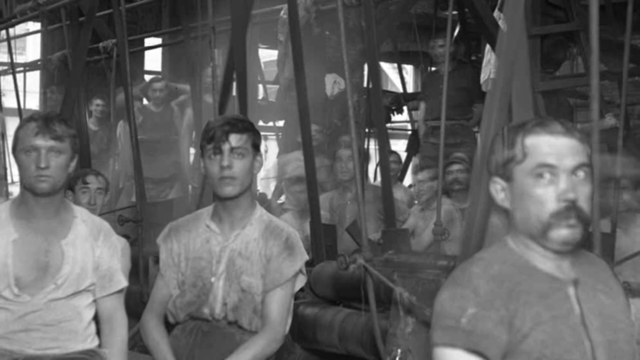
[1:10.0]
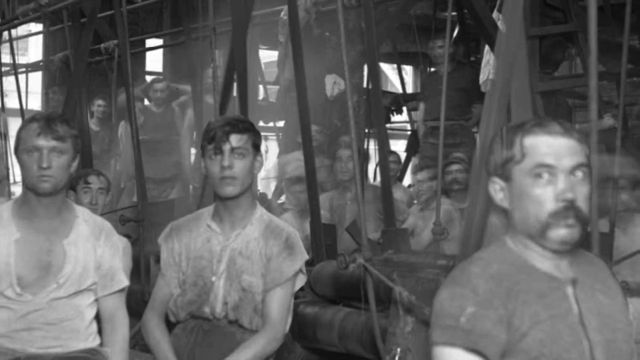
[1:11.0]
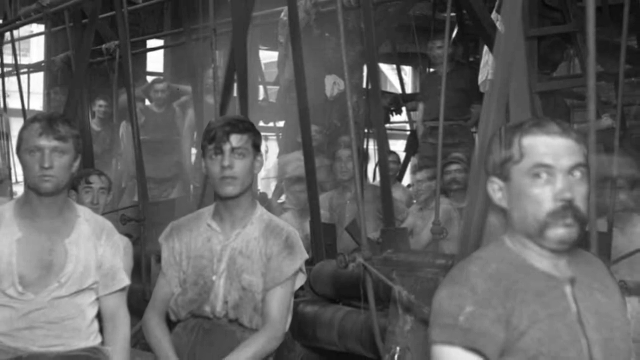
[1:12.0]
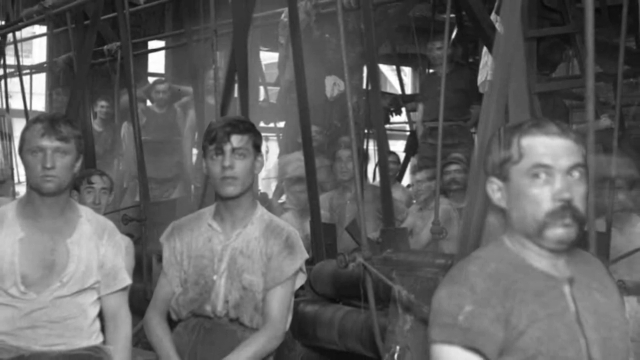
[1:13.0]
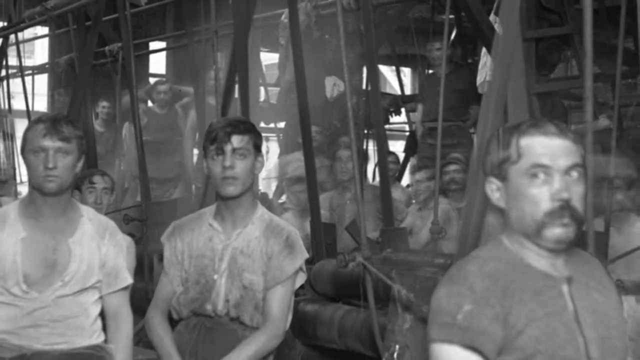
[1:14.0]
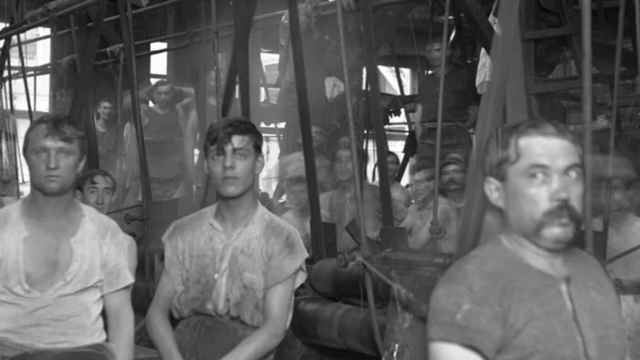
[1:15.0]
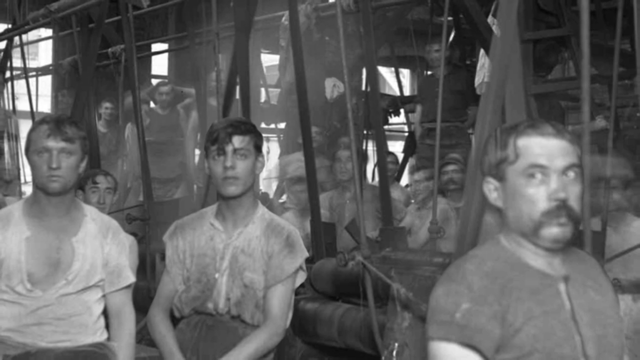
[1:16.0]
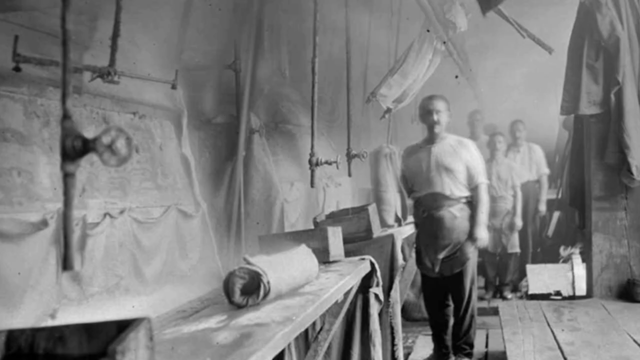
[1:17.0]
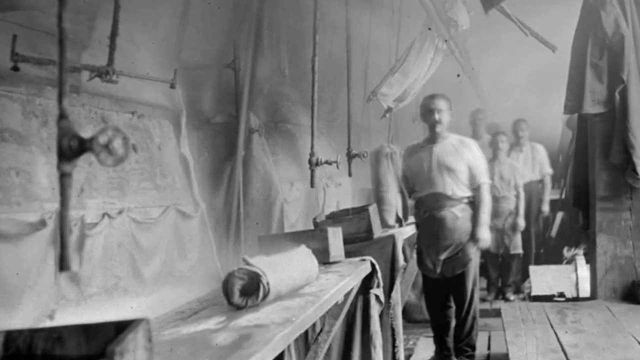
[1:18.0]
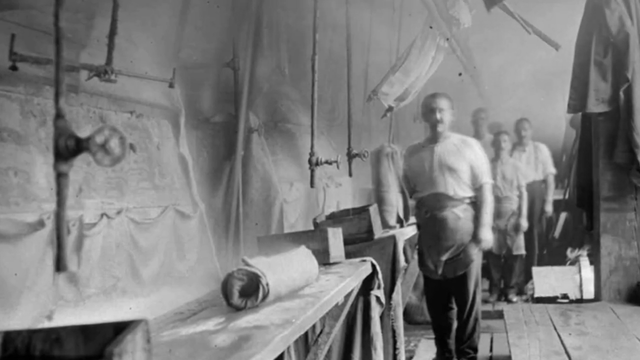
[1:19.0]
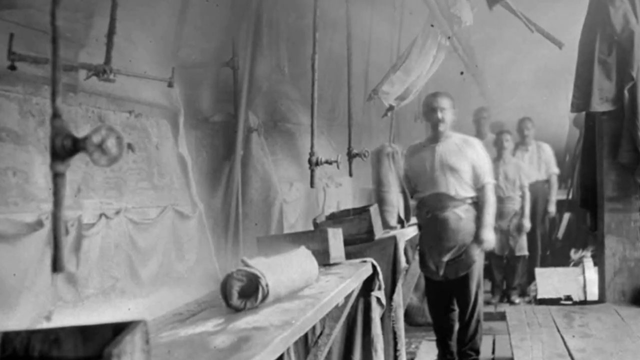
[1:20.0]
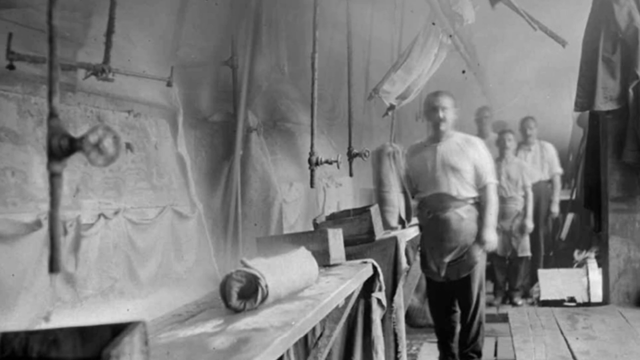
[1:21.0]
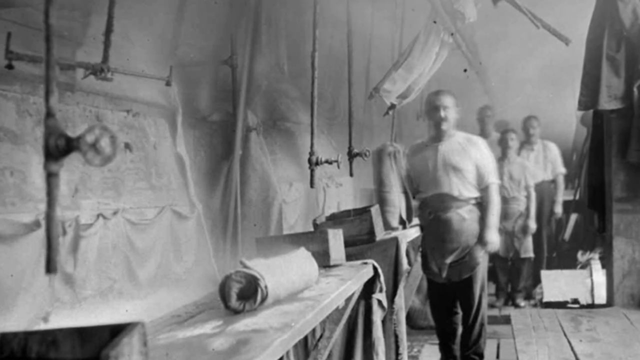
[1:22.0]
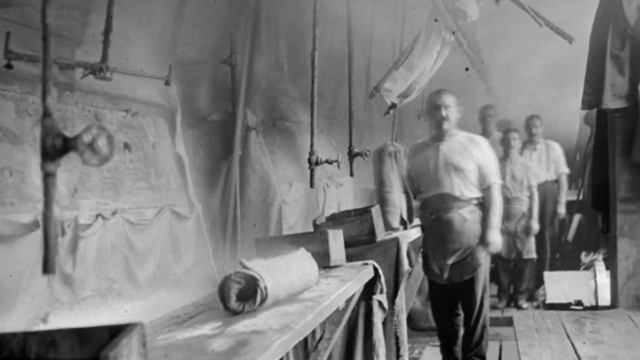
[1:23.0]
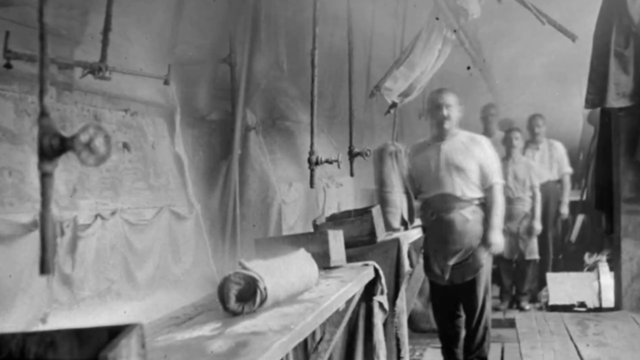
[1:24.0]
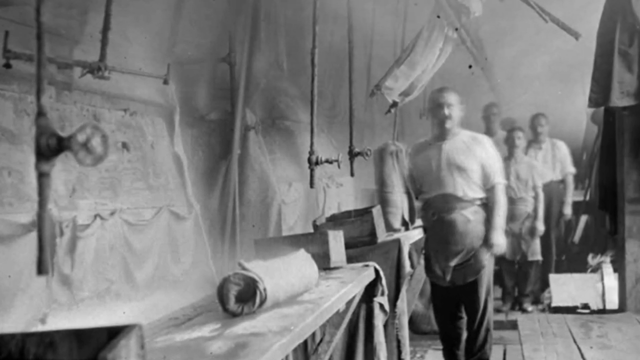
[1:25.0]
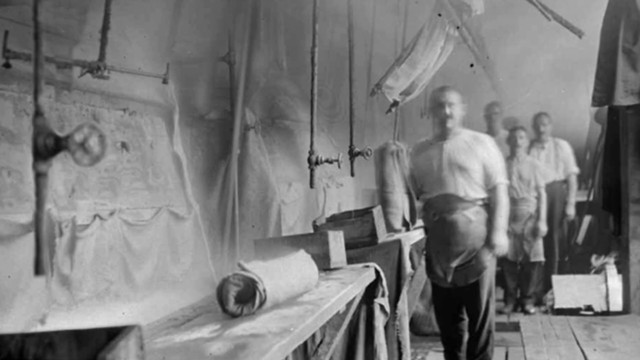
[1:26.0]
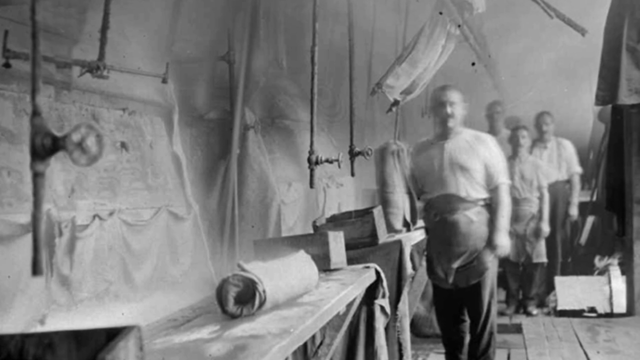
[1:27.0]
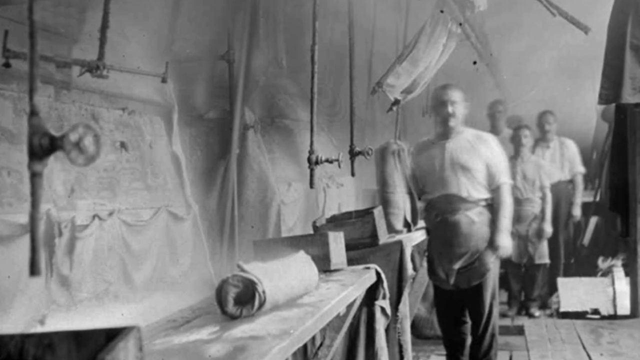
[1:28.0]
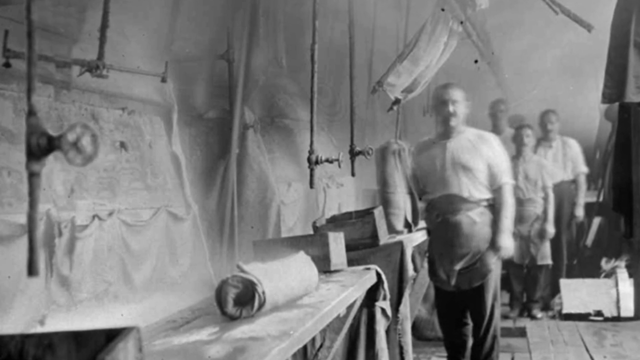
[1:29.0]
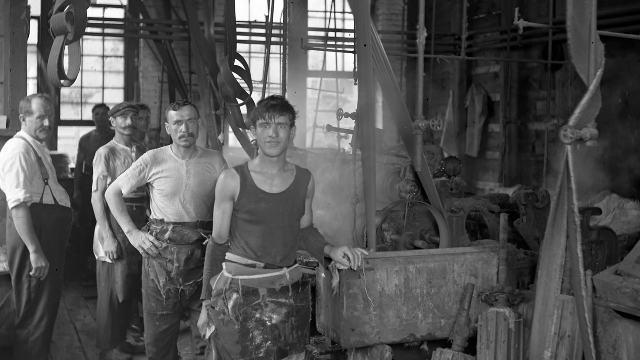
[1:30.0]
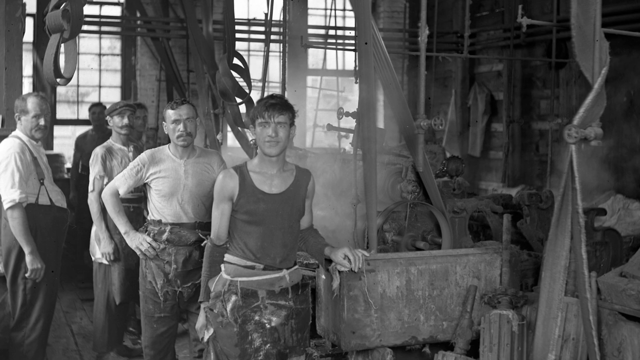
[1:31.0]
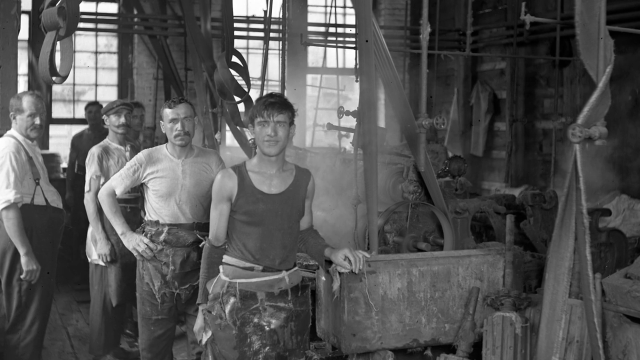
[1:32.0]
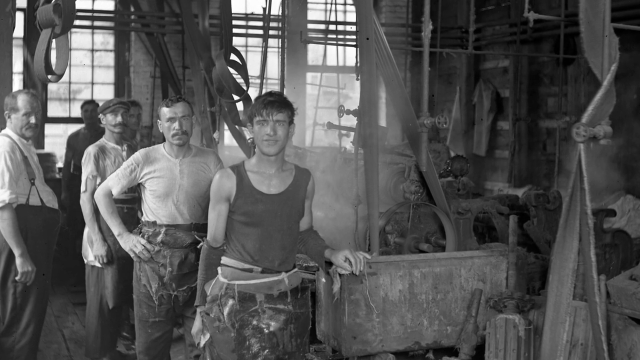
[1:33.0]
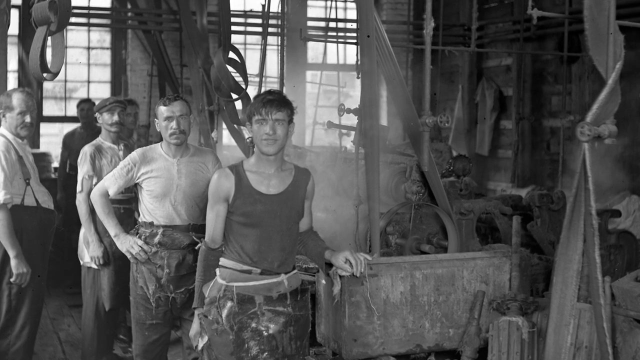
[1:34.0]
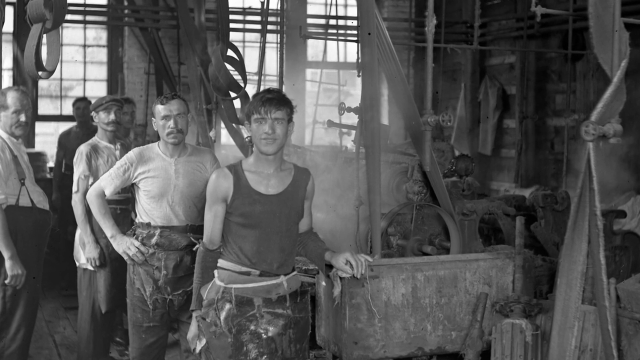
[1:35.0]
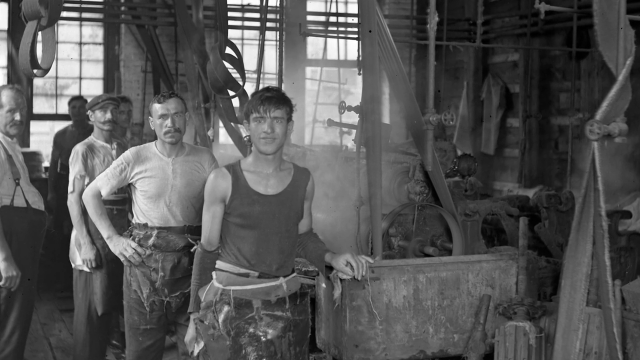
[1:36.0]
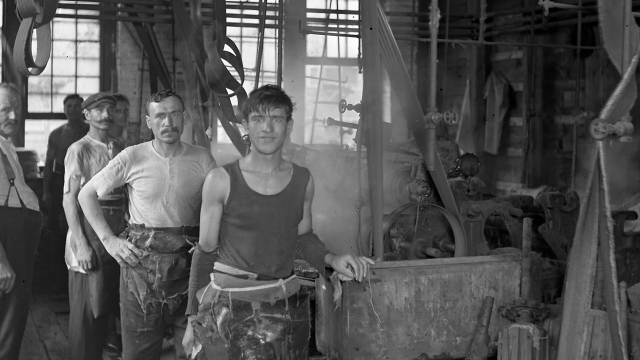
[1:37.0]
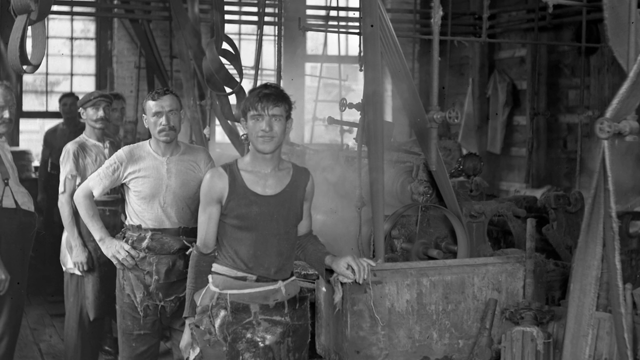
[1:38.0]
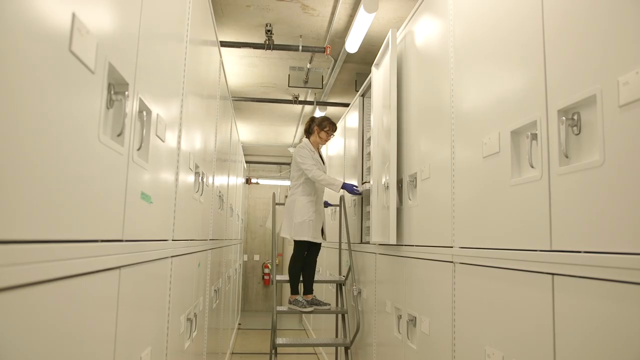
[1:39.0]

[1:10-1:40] A black-and-white photograph shows factory workers, apparently in the textile industry, with sweat and dirt on their shirts; they appear to be crammed into one room with very little in the way of safety measures. Another black-and-white historical photograph shows textile workers working with fabric and wool; they wear aprons, and a table next to them holds different types of textiles and fabrics. Another photograph shows a textile factory, probably related to dyeing, with barrels in the back and smoke coming out of them, possibly from heating up the materials. The men wear very light clothing, and there are lots of gears and levers, as well as straps and hooks hanging from the wall.